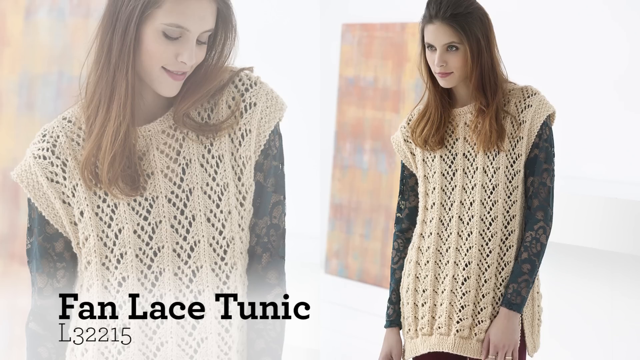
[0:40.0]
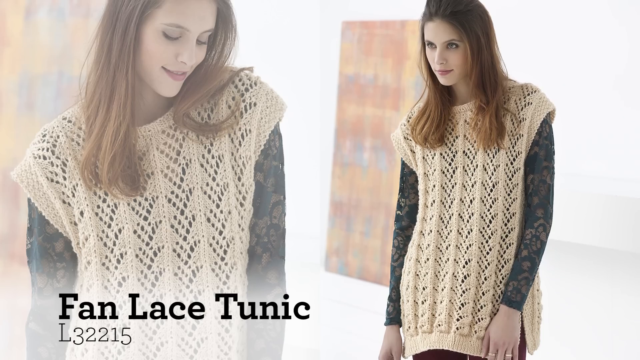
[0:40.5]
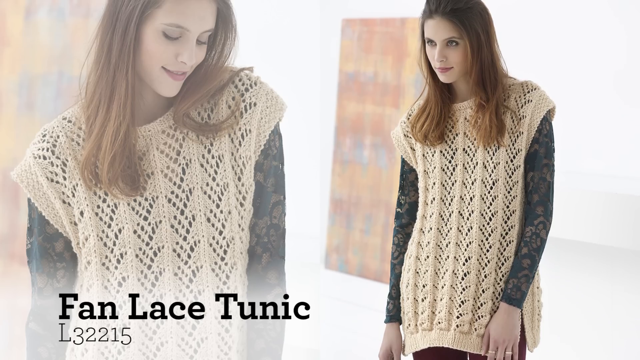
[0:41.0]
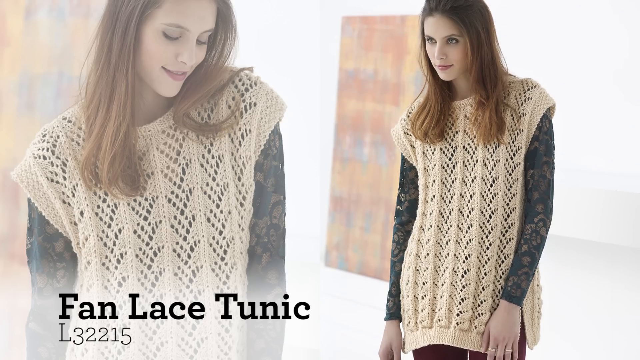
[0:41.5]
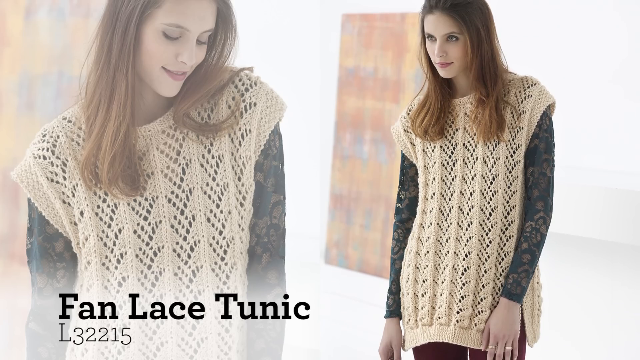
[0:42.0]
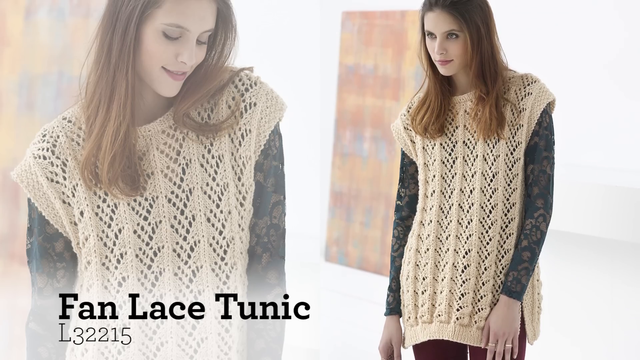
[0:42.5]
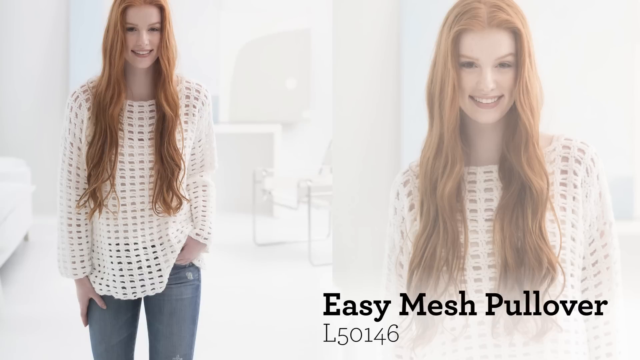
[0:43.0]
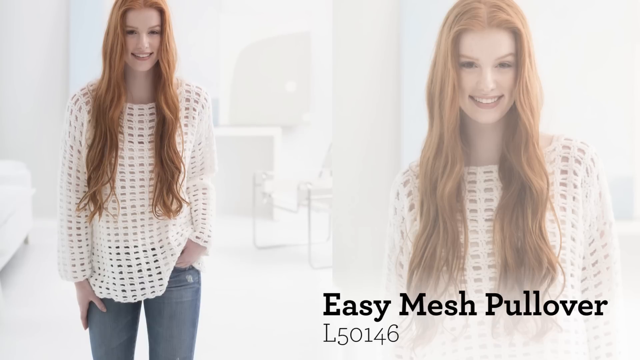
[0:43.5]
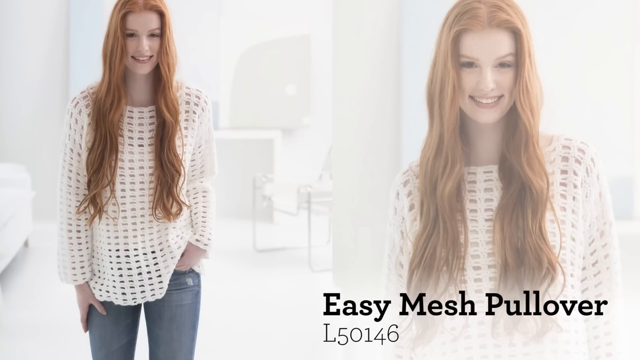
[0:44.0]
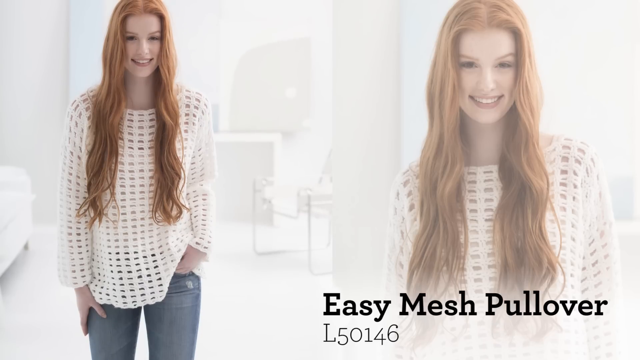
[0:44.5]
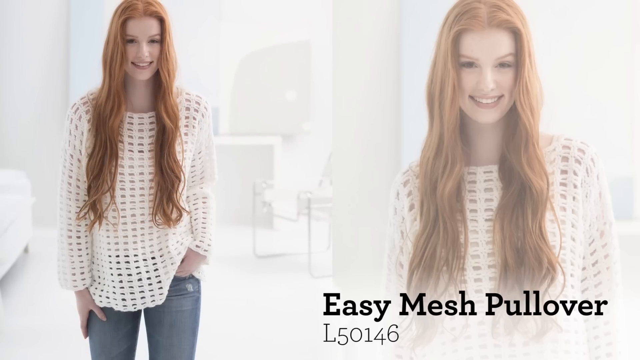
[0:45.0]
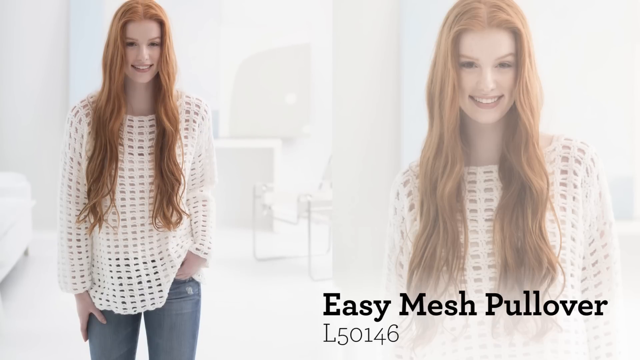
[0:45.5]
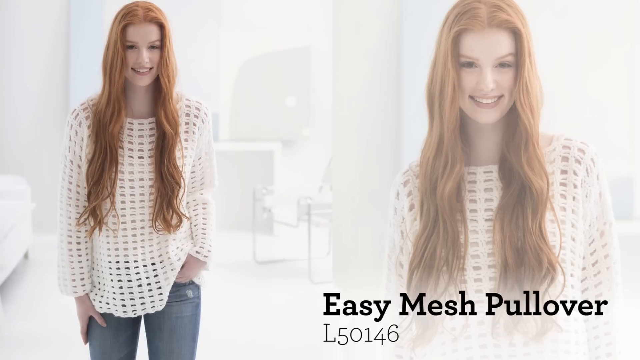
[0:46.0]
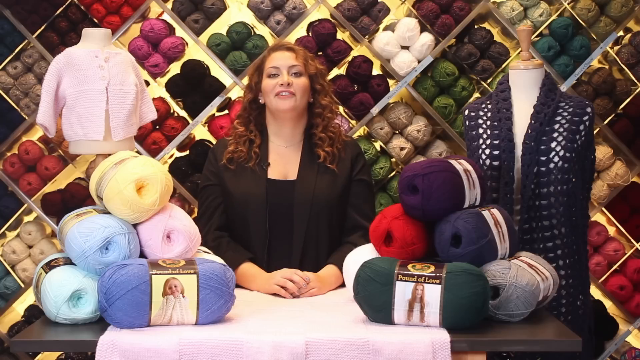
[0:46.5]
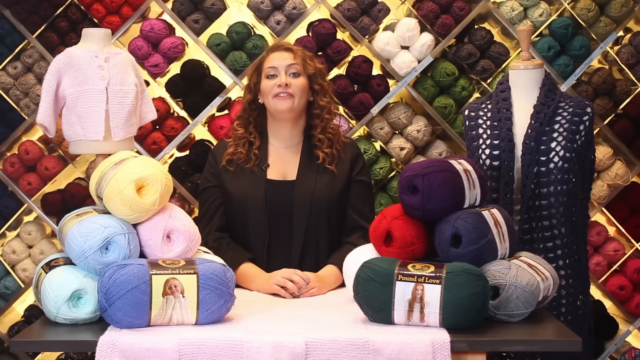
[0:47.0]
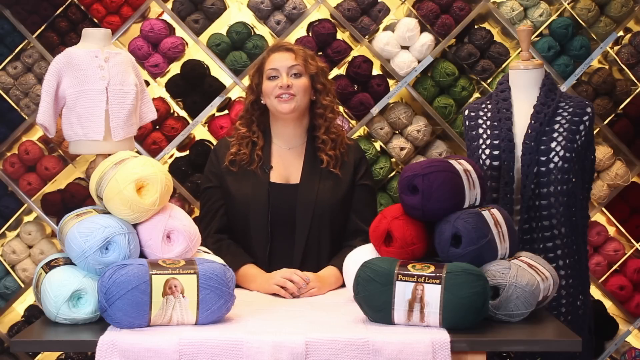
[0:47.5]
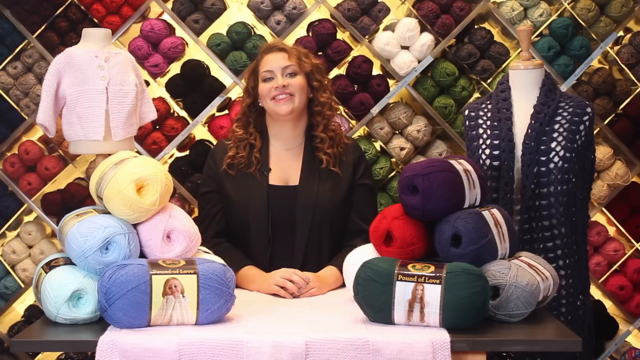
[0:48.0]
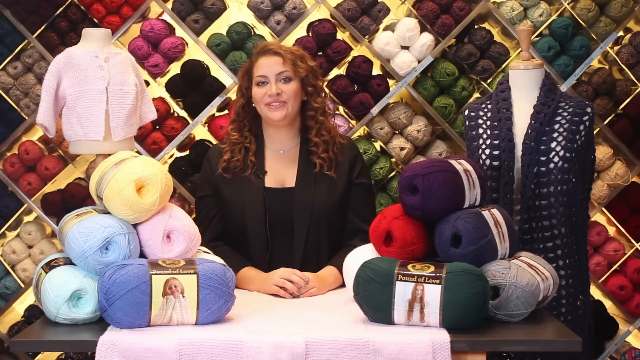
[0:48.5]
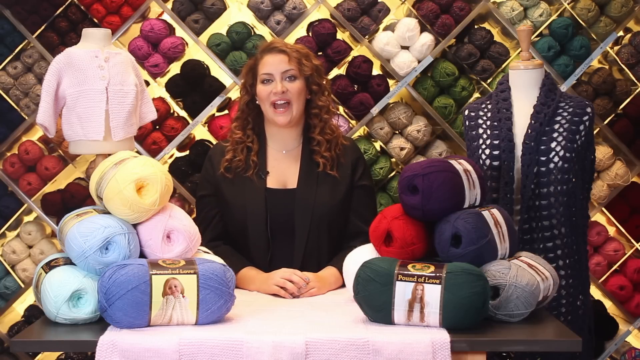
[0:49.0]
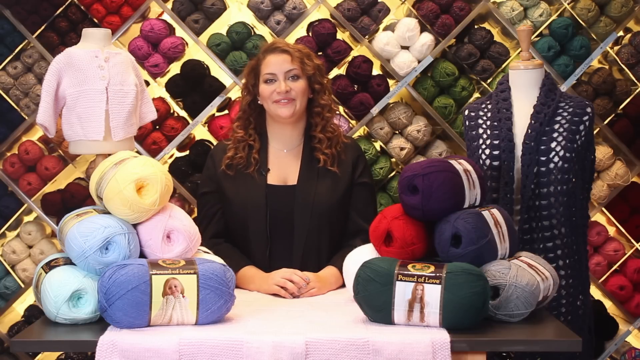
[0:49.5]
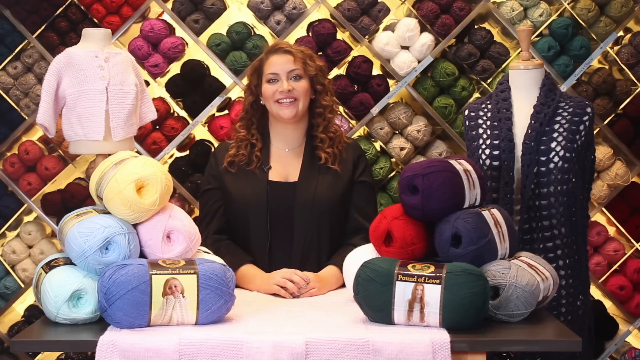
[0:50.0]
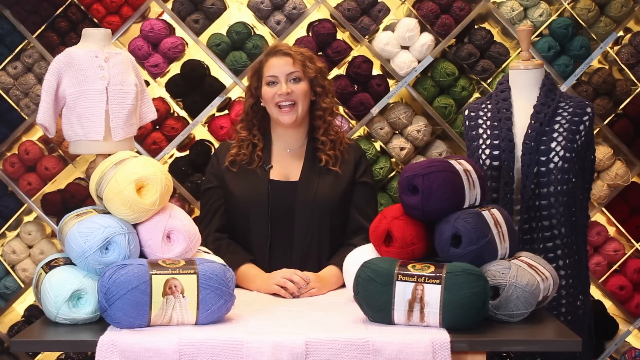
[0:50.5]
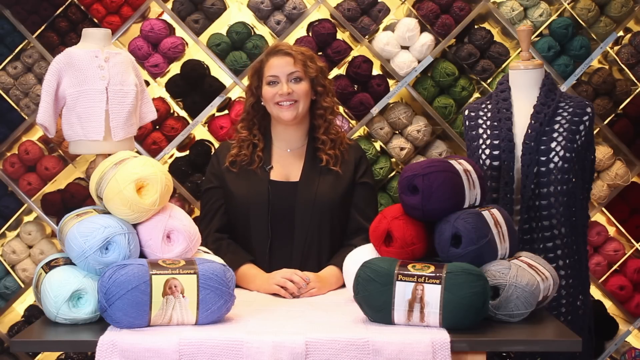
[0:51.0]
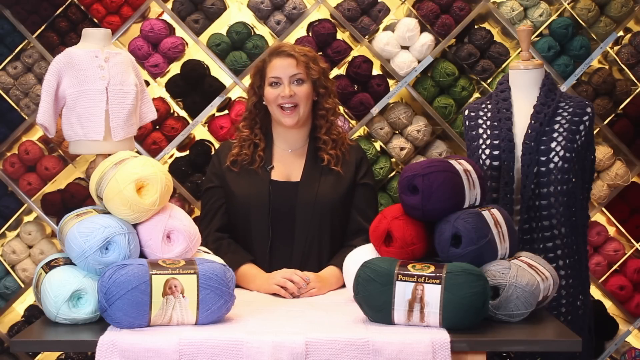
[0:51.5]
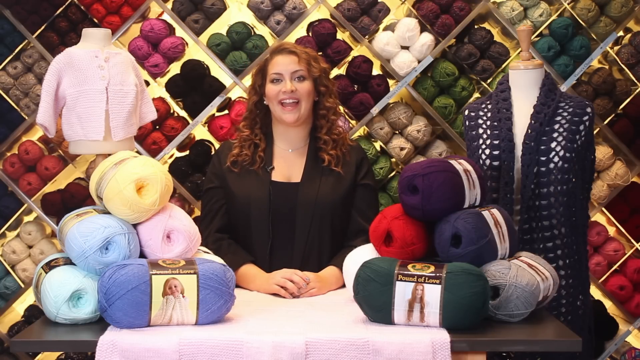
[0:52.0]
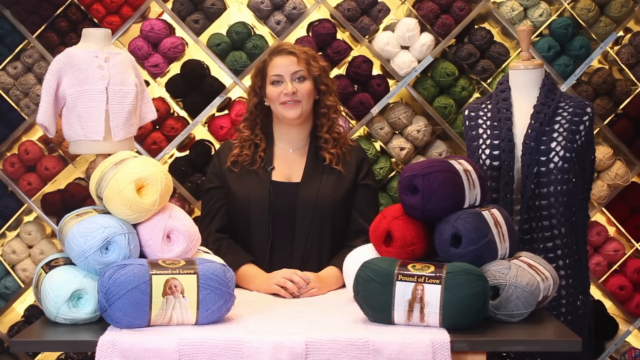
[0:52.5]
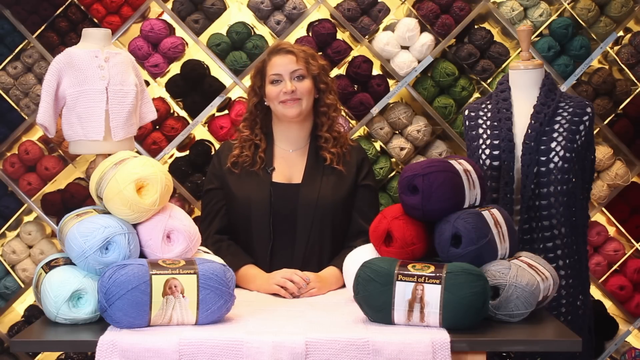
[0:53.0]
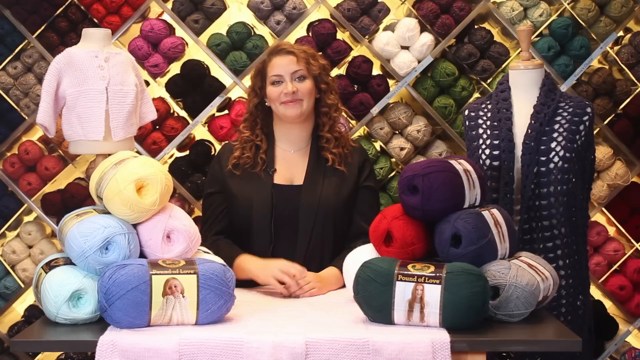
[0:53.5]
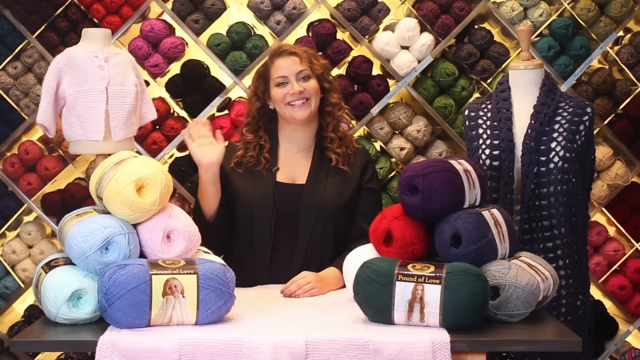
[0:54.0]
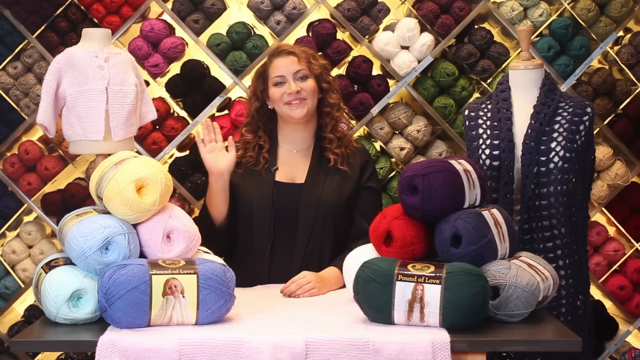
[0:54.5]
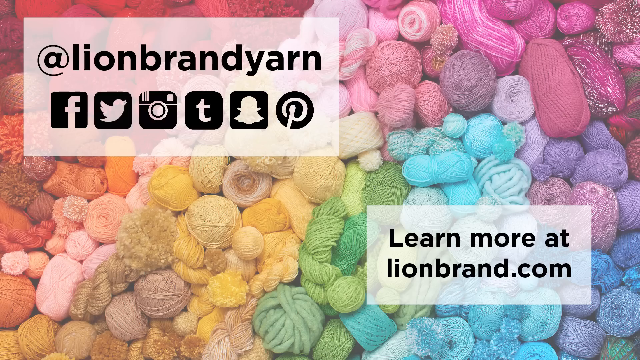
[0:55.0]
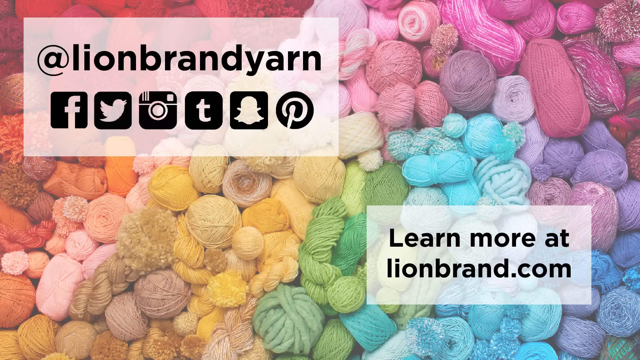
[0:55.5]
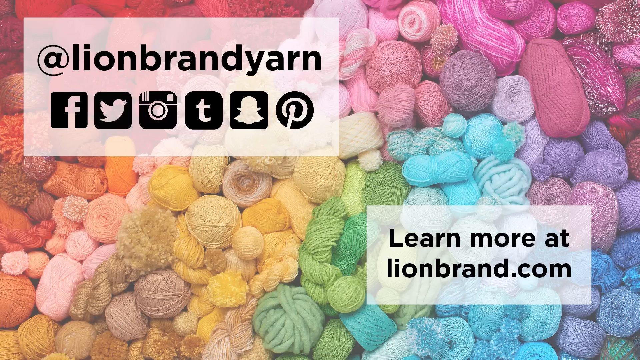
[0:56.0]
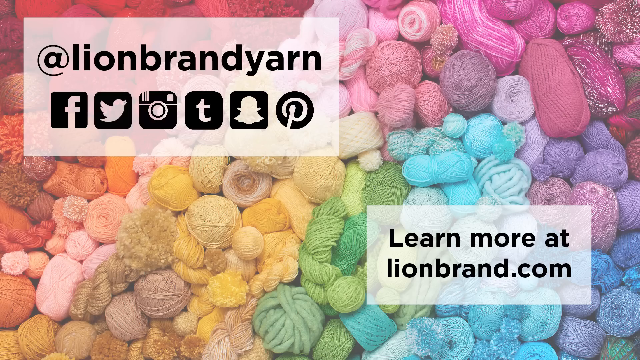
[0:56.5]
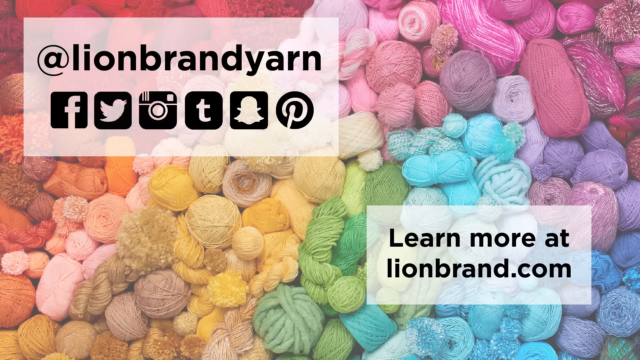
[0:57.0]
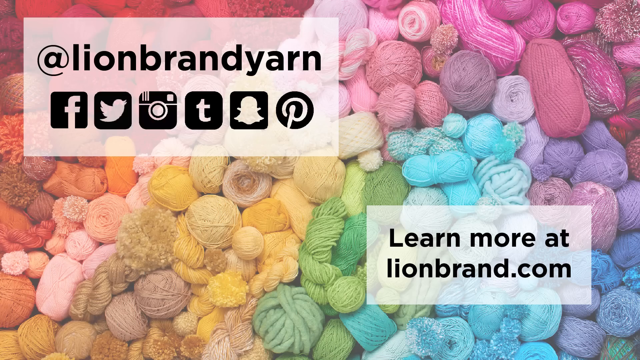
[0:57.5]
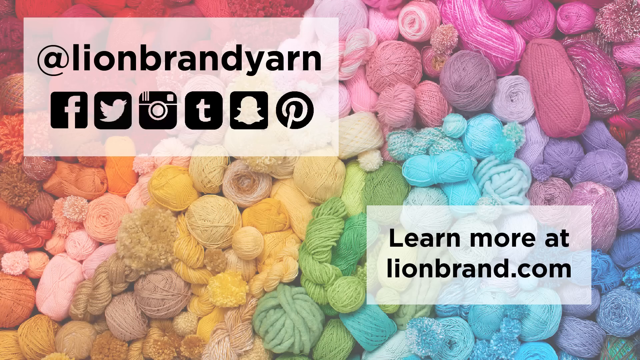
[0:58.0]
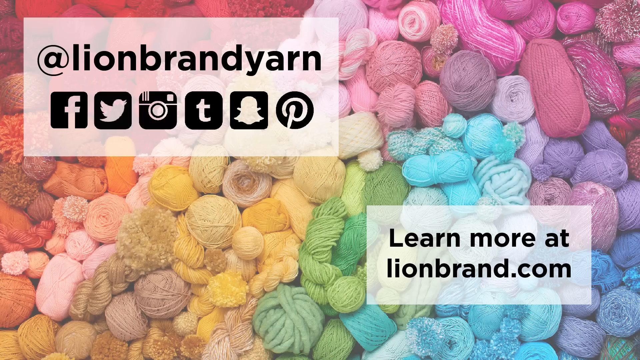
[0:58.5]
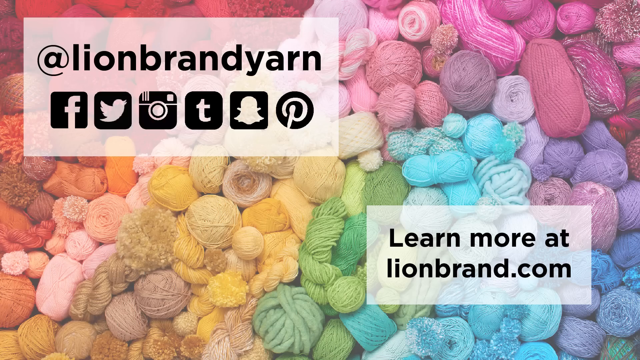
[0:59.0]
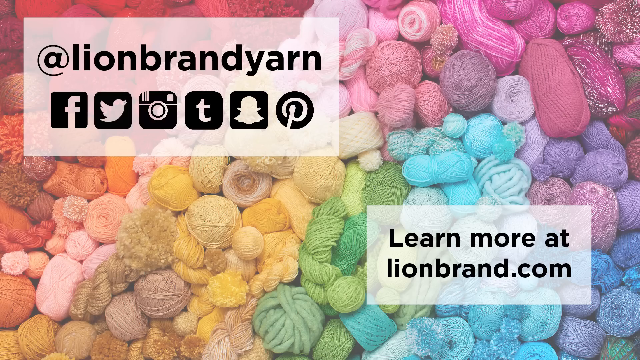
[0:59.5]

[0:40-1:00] Different colours of wool are used in a shop; the brand is called Love. Products made from it include baby throwers, a chamber top for adults, knit baby sets, a low vest that is shown in the video, a shower, a tunic and a mesh pullover.